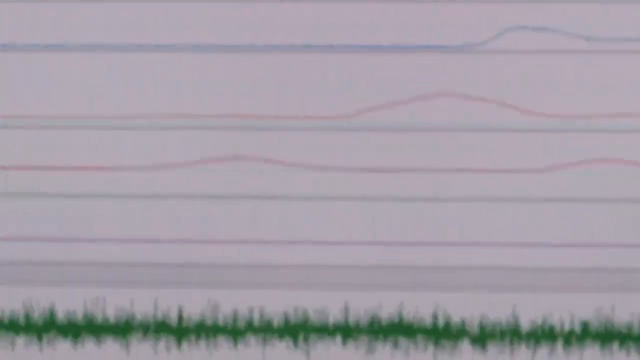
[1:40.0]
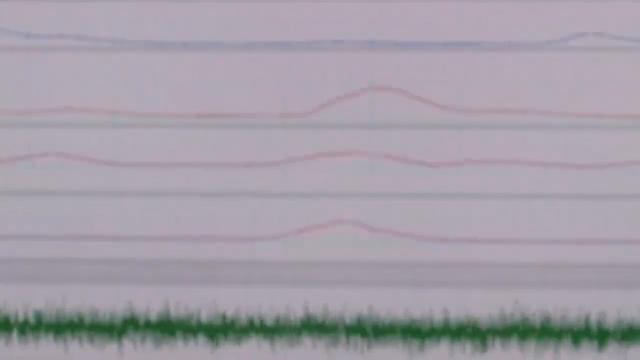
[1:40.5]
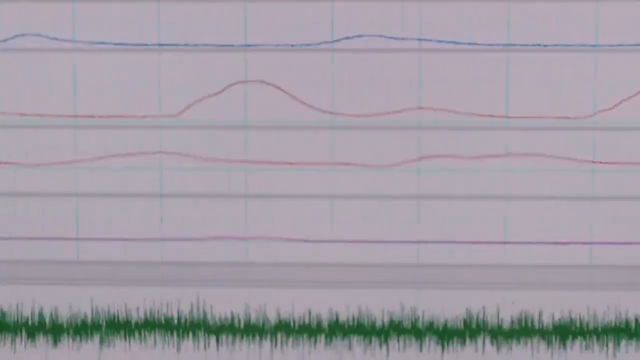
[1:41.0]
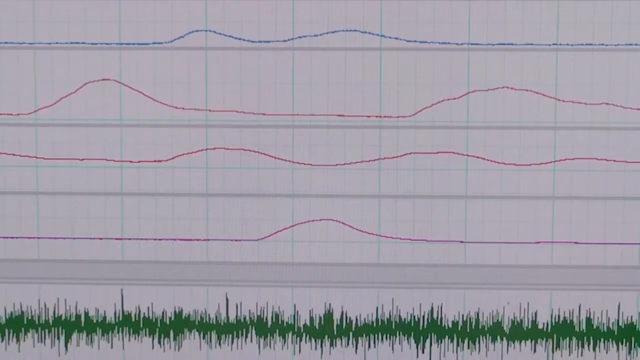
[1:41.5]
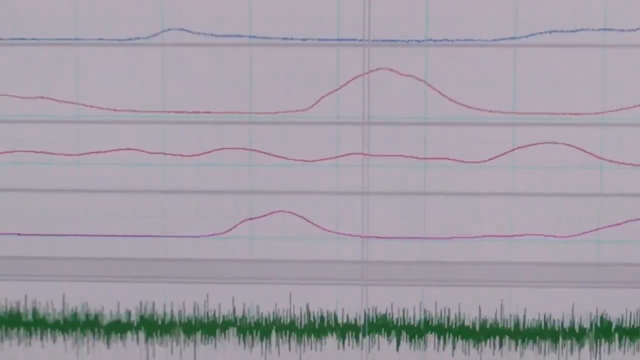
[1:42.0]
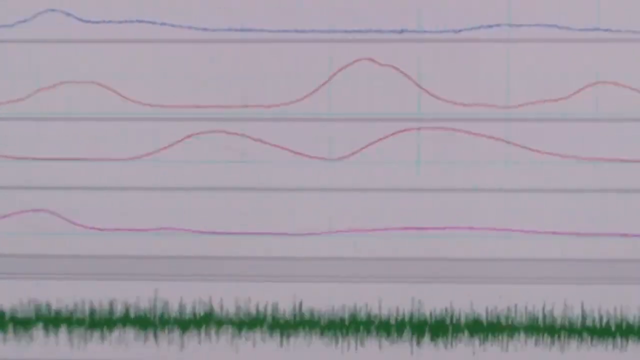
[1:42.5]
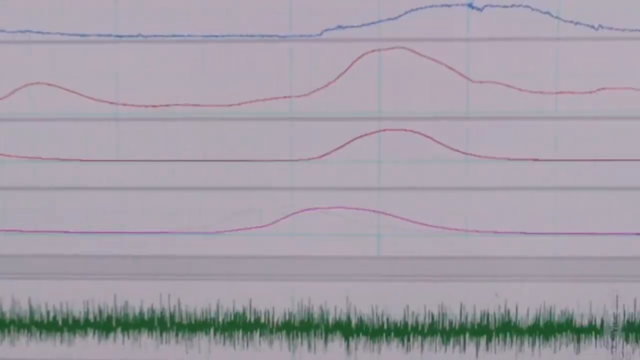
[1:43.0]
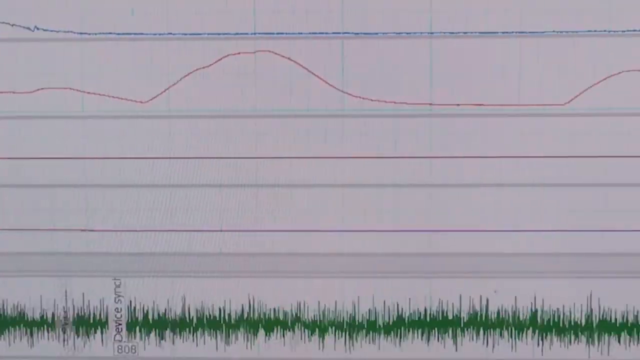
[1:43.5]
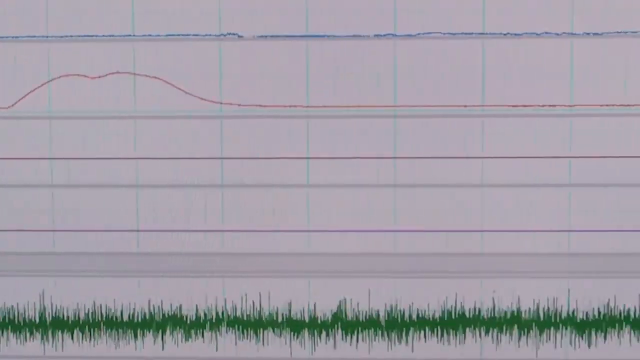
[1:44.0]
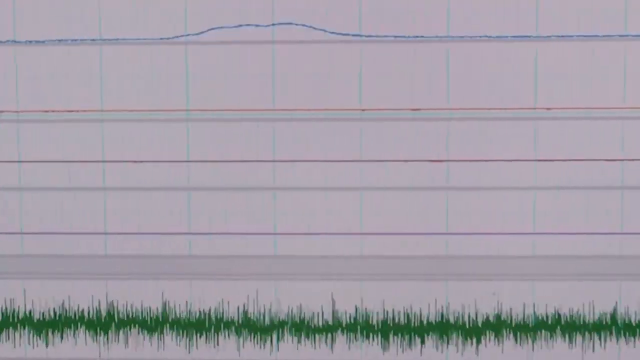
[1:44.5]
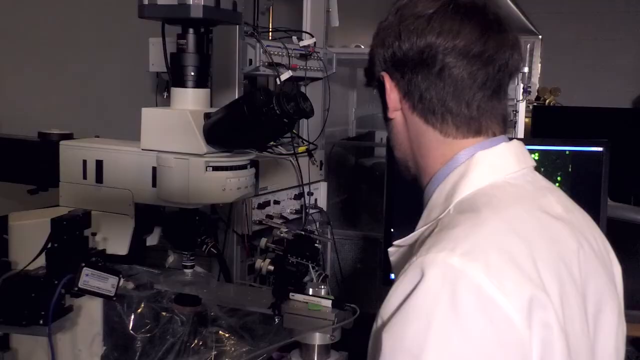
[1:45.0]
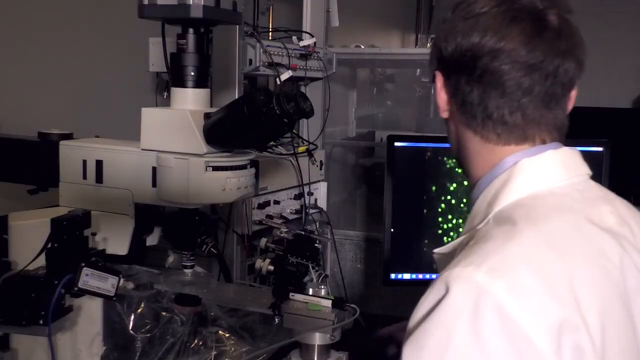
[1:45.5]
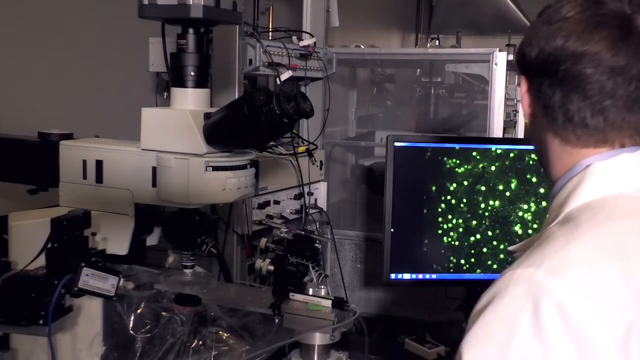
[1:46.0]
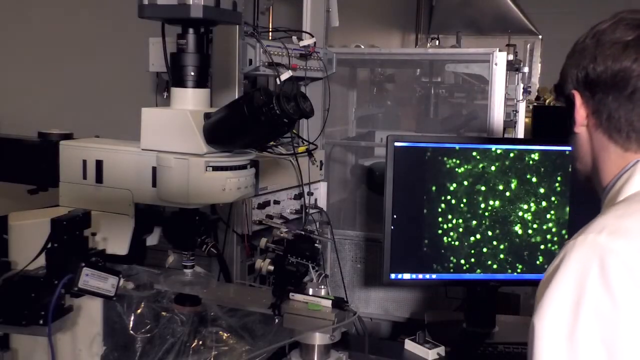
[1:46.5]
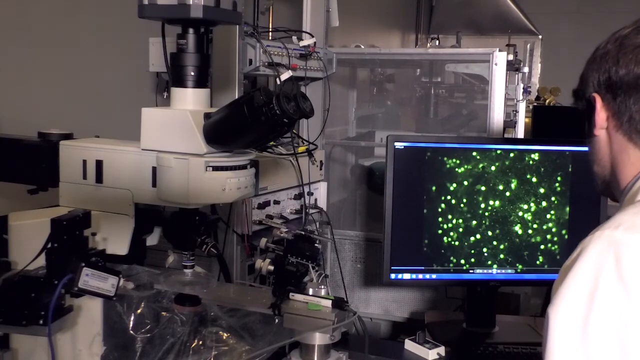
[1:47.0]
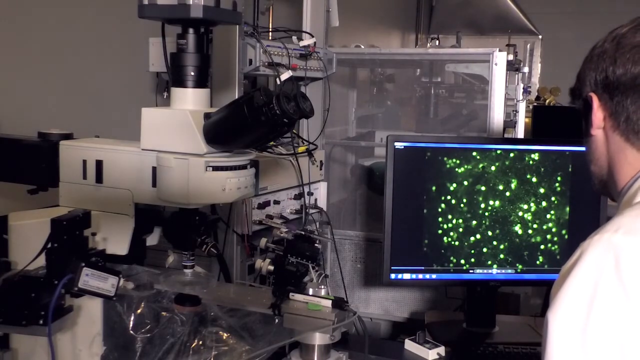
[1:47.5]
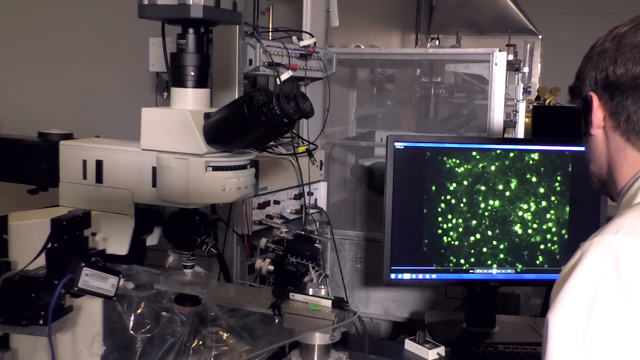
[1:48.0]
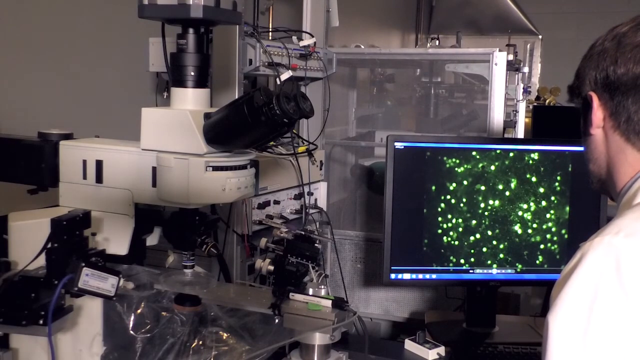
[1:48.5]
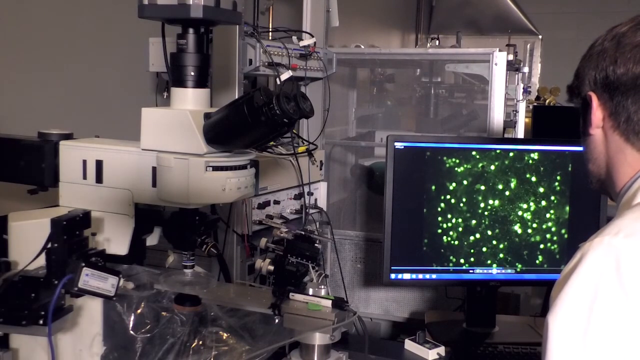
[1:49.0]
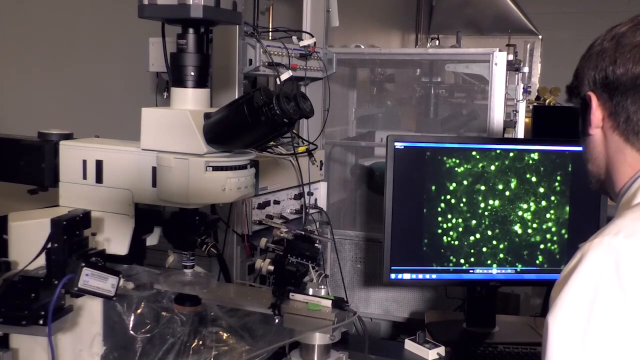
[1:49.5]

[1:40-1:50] A computer printout of some kind of scientific experiment moves across the page from left to right, with a red line and a blue line moving up and down. A scientist works in a laboratory in front of a computer screen containing a large number of fluorescent green lights. Boxes of medical equipment are all around the room, and a large microscope with black binoculars and a white plastic square body is on the left-hand side of the screen. He looks at the information going across the screen, which resembles a heartbeat printout from the doctor's. There are four lines on the printout: the top line is blue and the other three are red, all going up and down as they move across the screen. Some of the lines hardly move, while others have very large undulations.